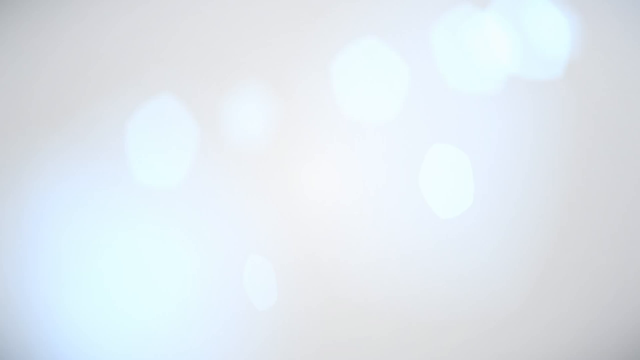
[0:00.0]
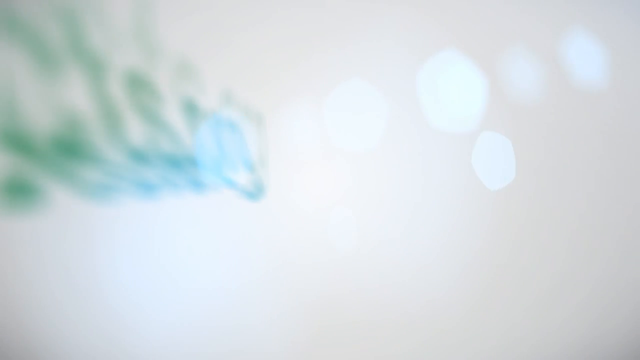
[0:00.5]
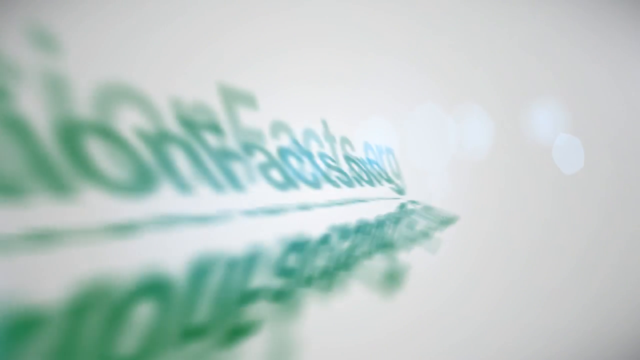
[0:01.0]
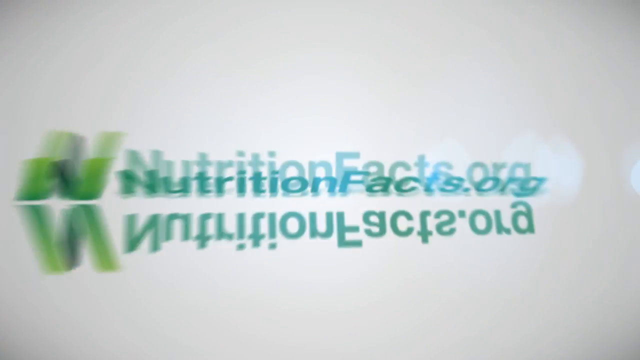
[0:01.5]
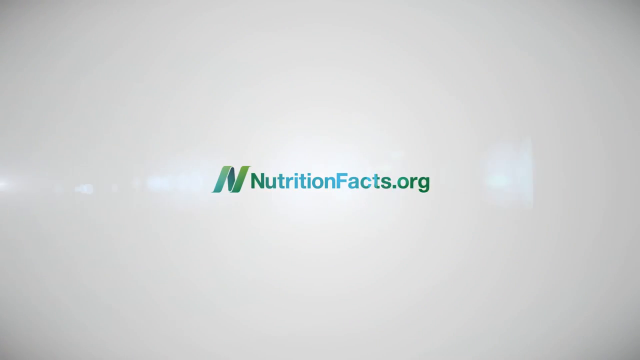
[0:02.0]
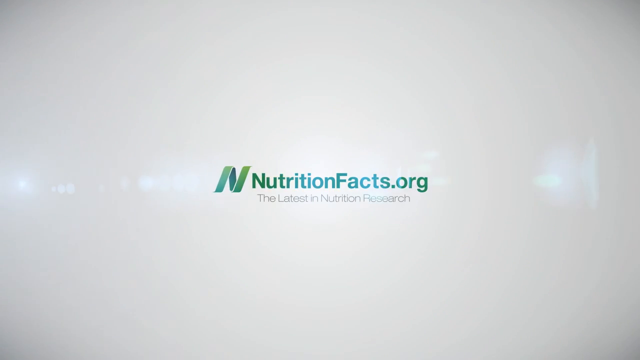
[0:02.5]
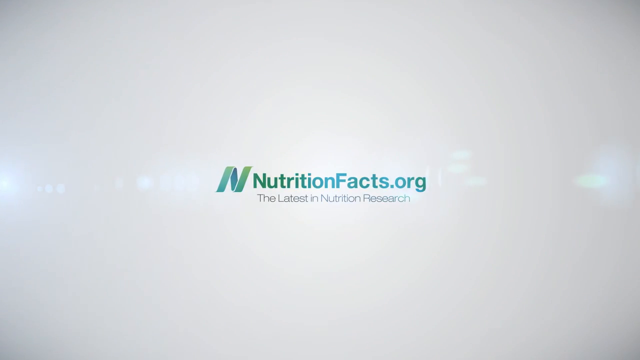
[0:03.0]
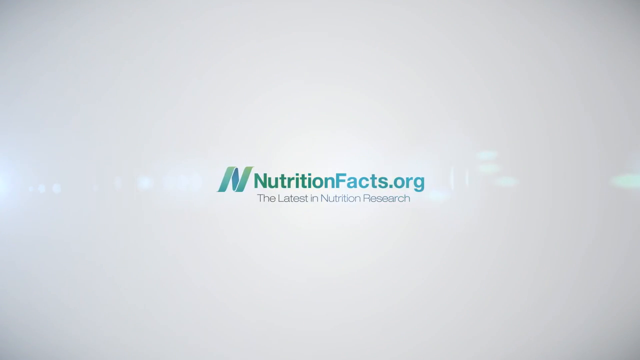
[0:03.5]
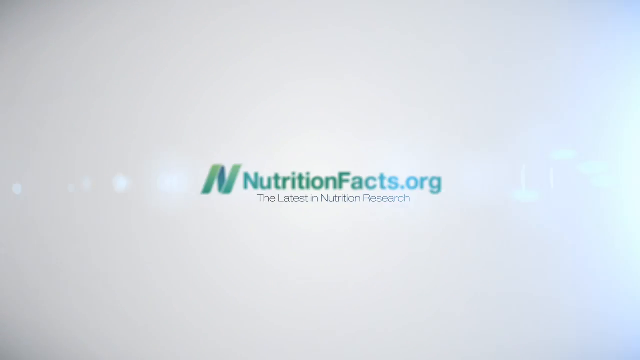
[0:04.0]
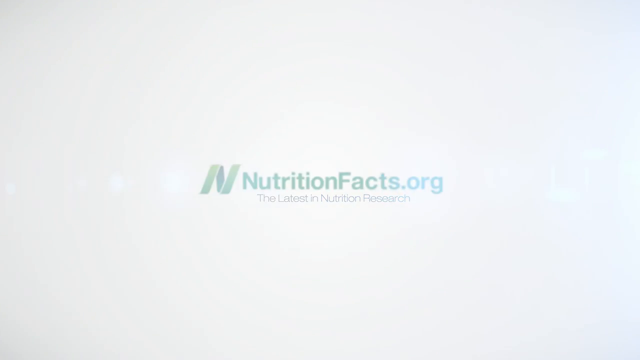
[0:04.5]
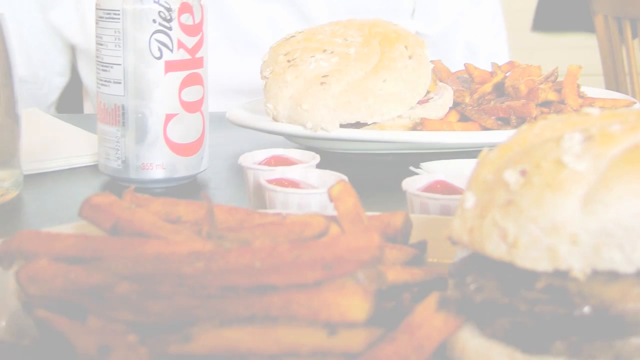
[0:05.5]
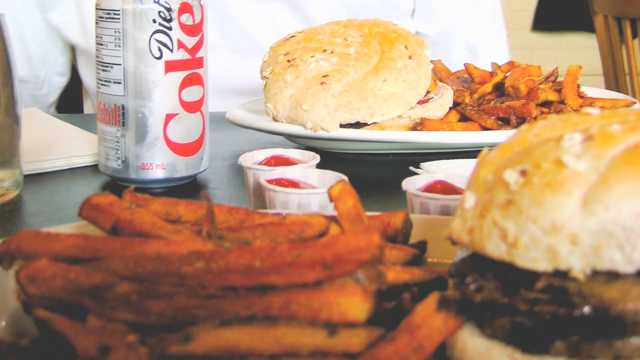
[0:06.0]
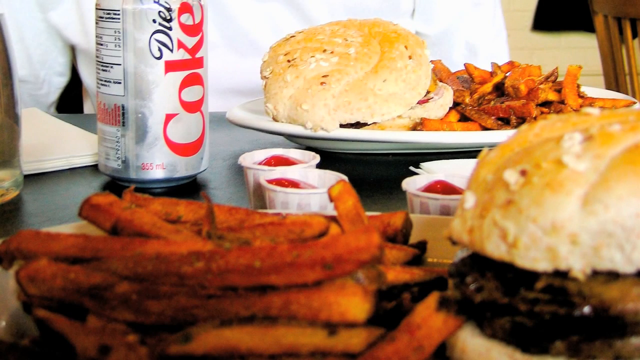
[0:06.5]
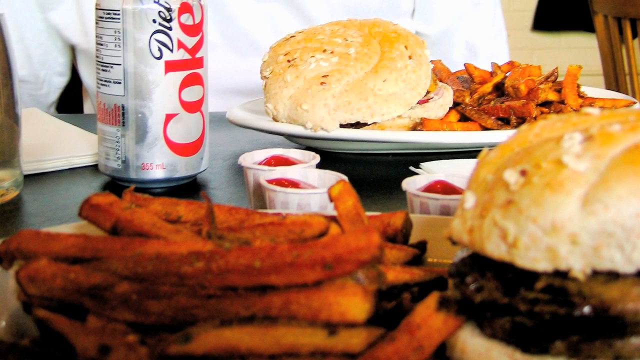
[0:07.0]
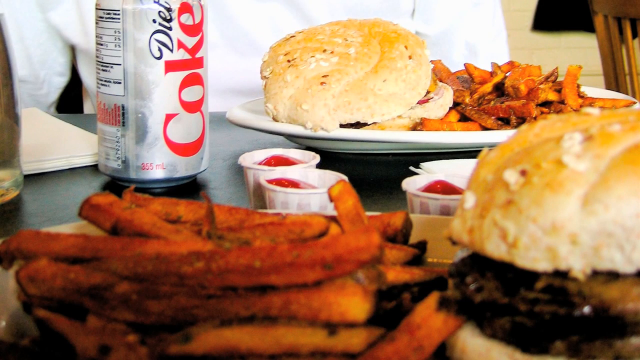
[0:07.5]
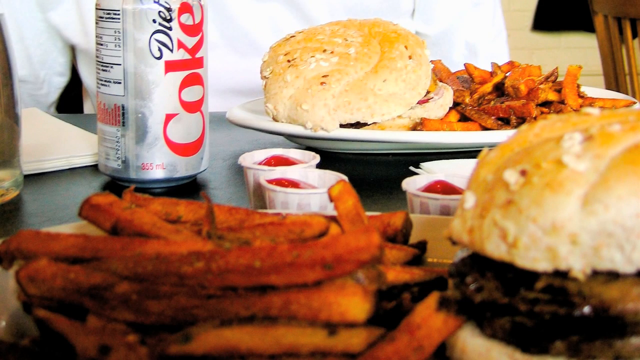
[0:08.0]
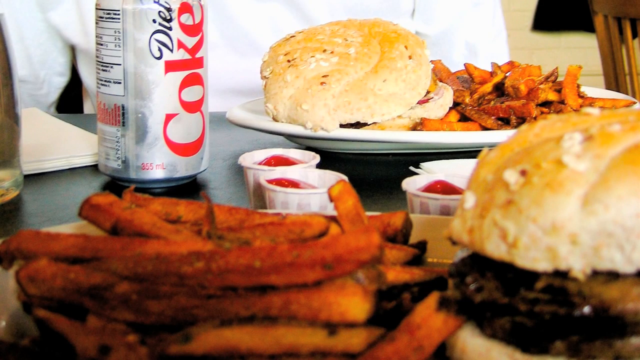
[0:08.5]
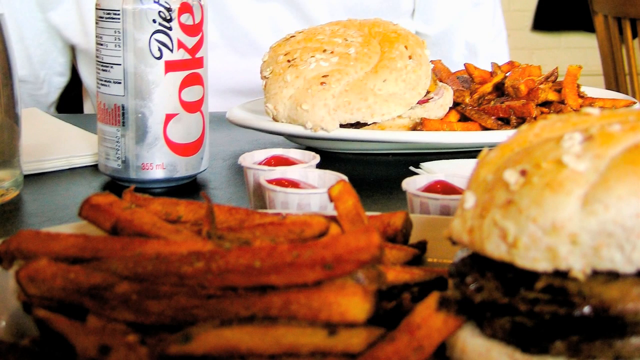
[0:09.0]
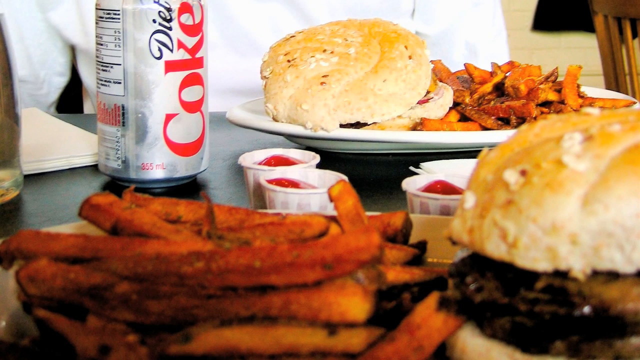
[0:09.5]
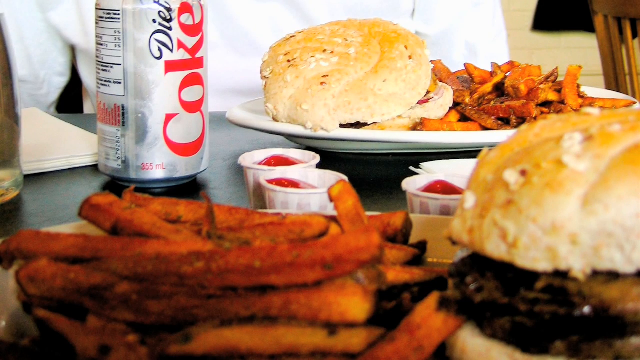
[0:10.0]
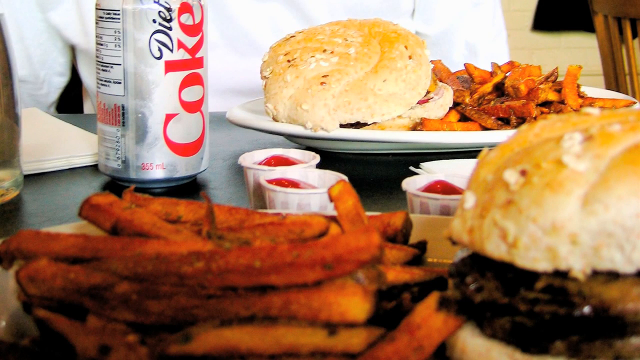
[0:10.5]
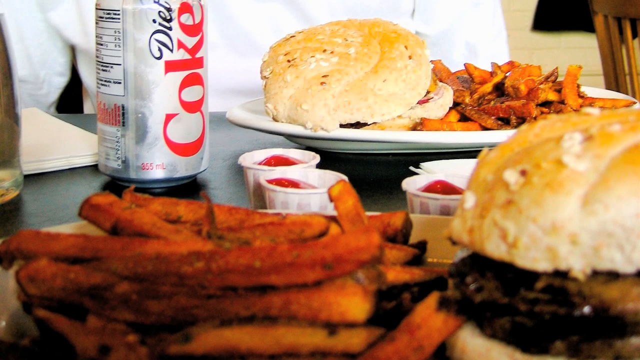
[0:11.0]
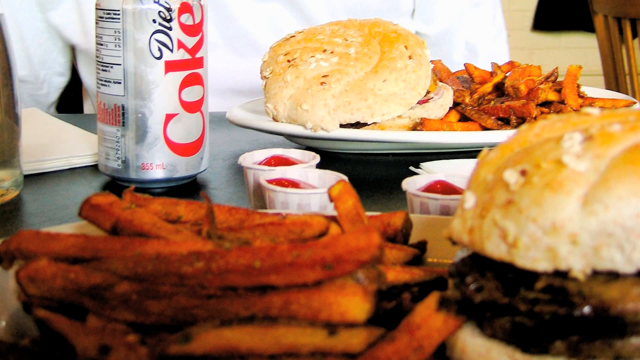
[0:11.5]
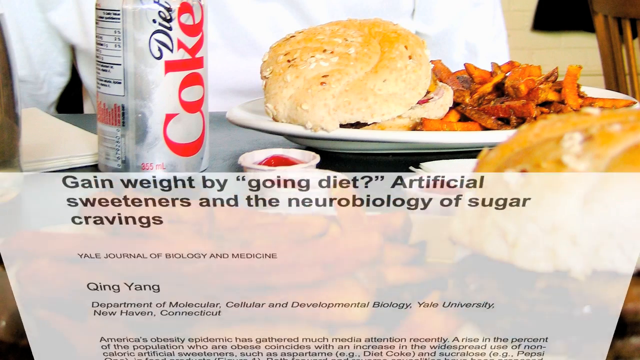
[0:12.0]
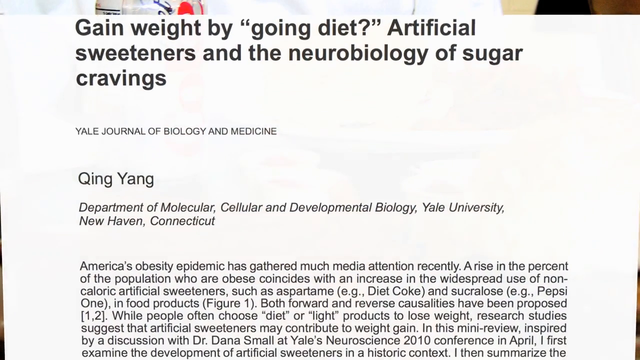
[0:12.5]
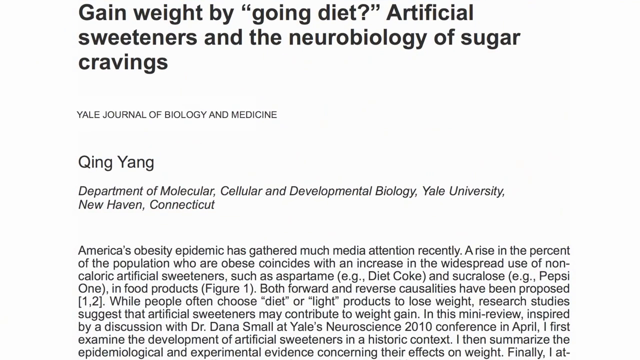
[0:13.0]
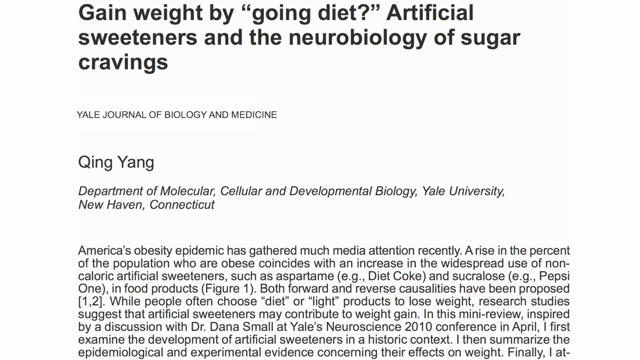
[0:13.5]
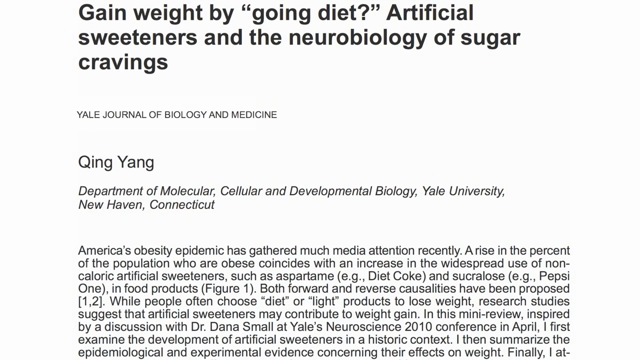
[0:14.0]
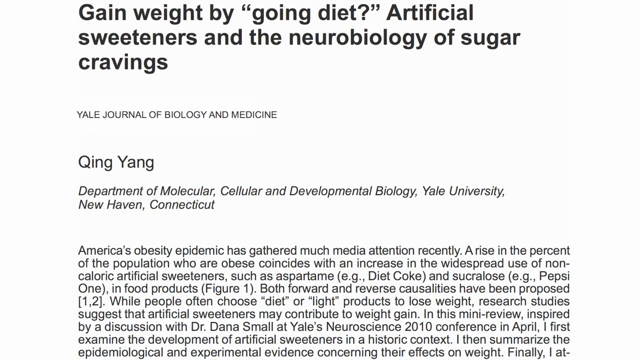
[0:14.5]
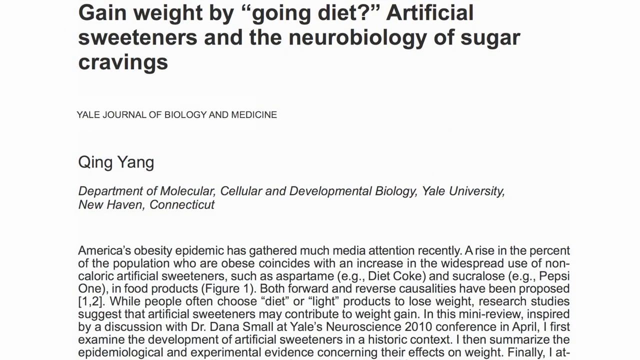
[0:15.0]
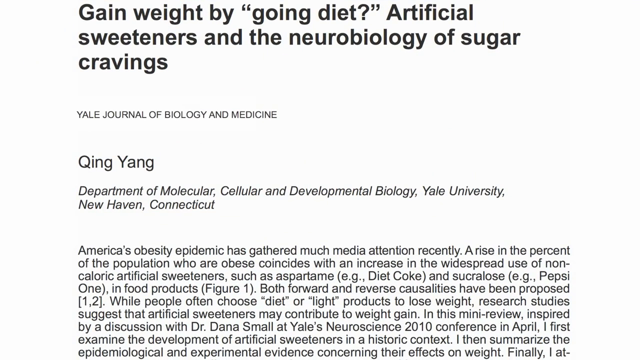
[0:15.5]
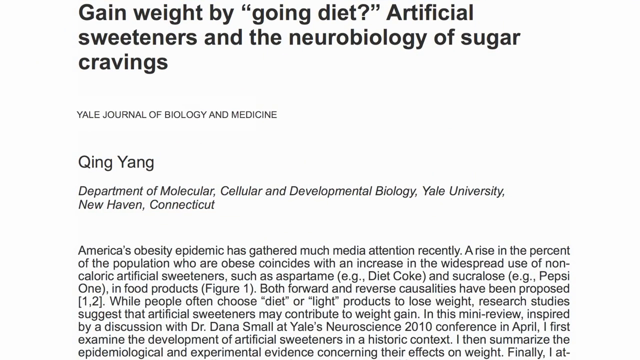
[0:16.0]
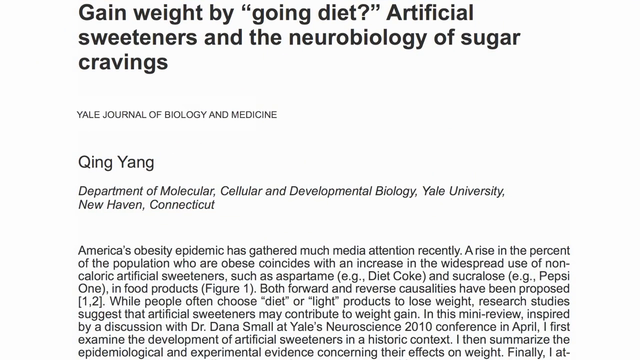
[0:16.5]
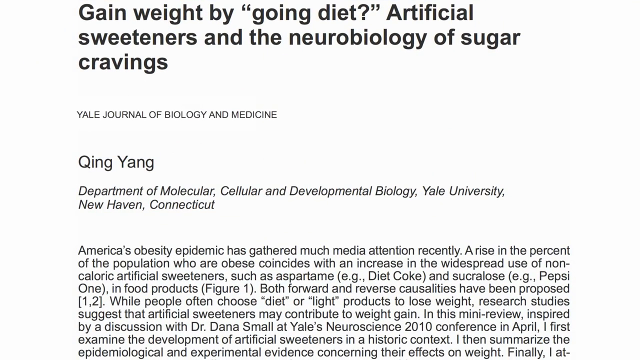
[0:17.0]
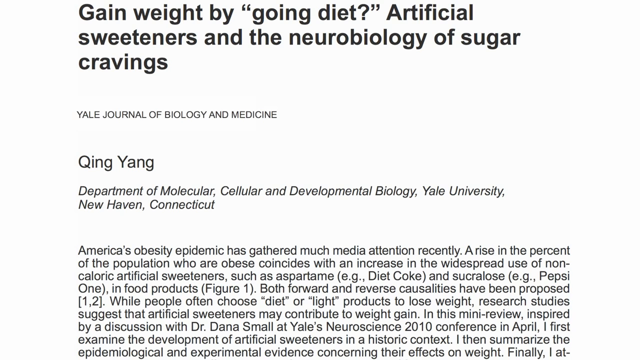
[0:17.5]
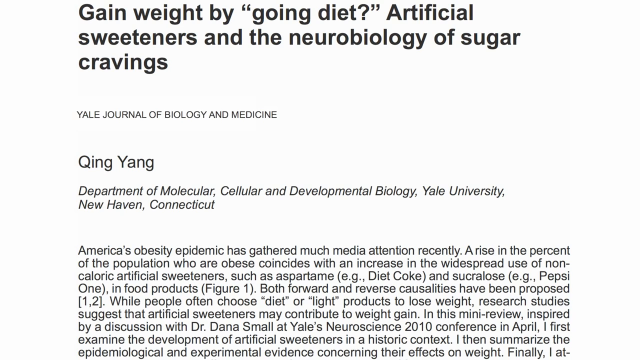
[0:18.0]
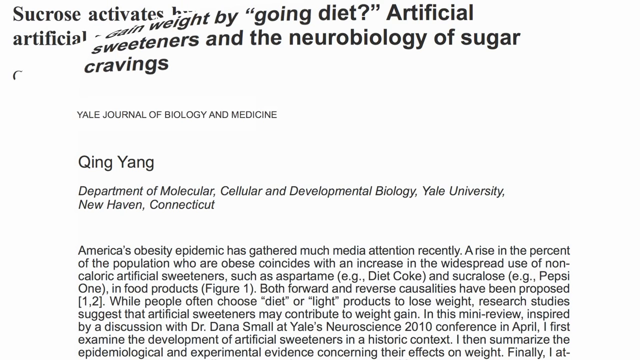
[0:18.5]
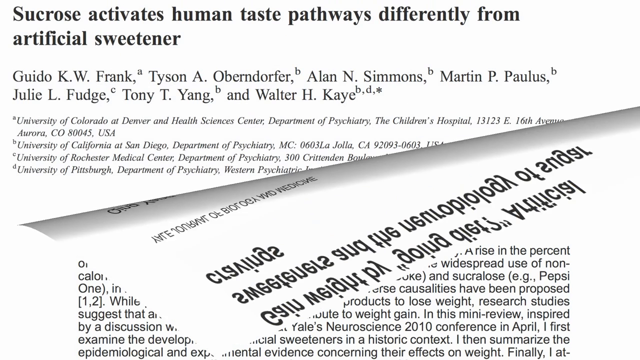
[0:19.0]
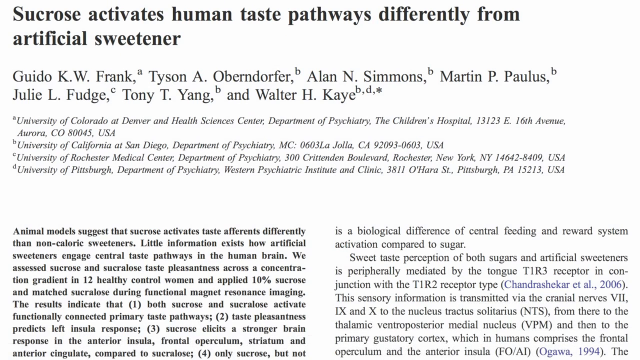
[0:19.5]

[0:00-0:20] The video opens with the text "nutritionfacts.org" in the center of the screen, in various shades of teal and green. Next, a Diet Coke in a can appears in the top left corner, along with a plate of food holding what looks to be a biscuit and perhaps french fries. There are french fries at the bottom of the screen and a biscuit on the right of the screen, and three paper cups of ketchup are on a tray with the rest of the food and the Diet Coke. A man dressed in white stands behind the food tray with his arms behind his back. Text then comes up on the screen reading "gain weight by going diet, artificial sweeteners, and the neurobiology of sugar cravings." This is an article in the Yale Journal of Biology and Medicine, written by Yin Yang, Department of Molecular, Cellular, and Developmental Biology, Yale University, New Haven, Connecticut. The view then changes to another page of the article.